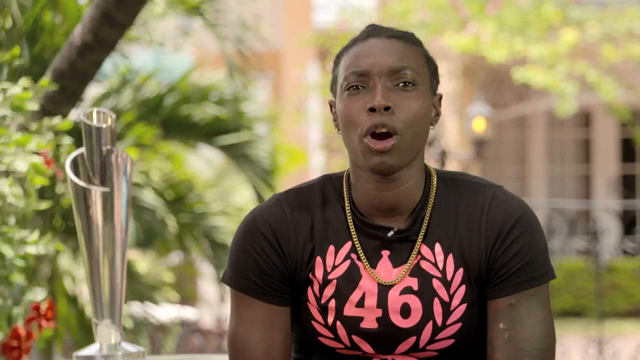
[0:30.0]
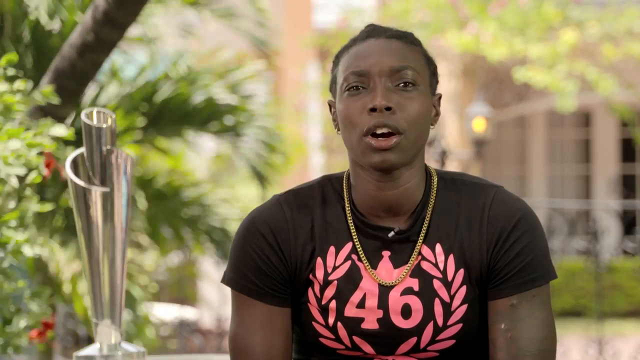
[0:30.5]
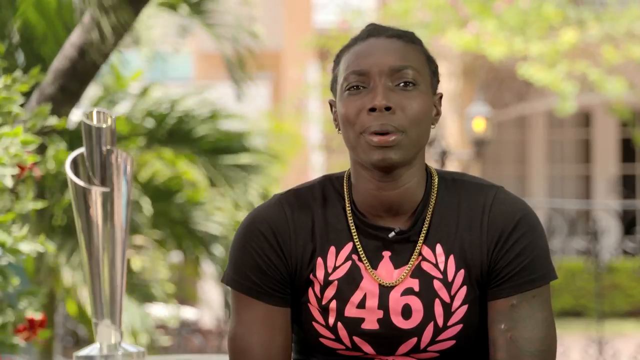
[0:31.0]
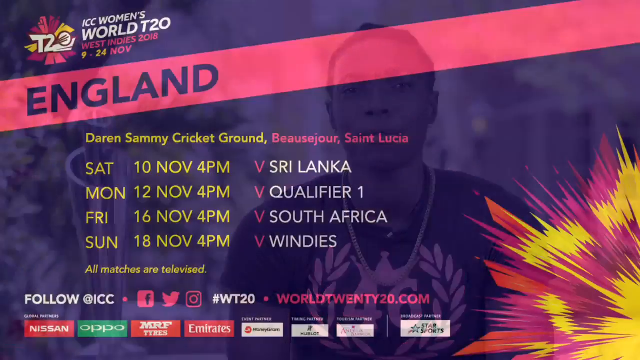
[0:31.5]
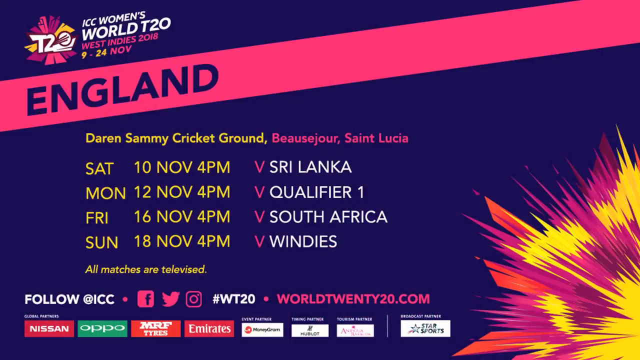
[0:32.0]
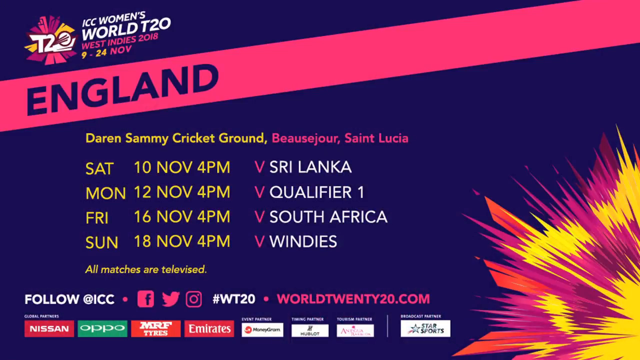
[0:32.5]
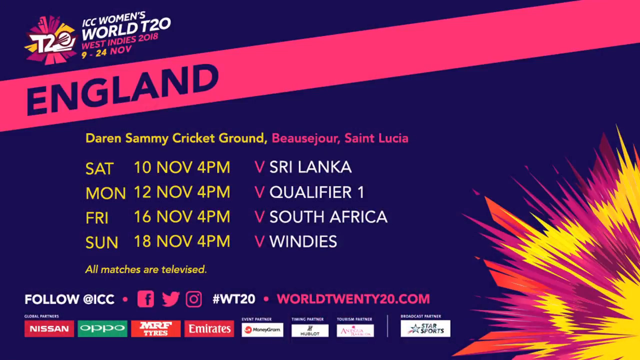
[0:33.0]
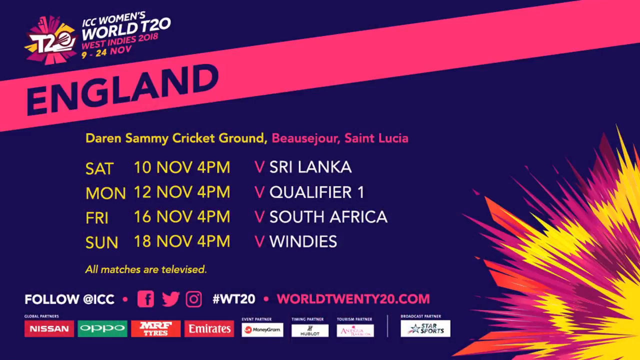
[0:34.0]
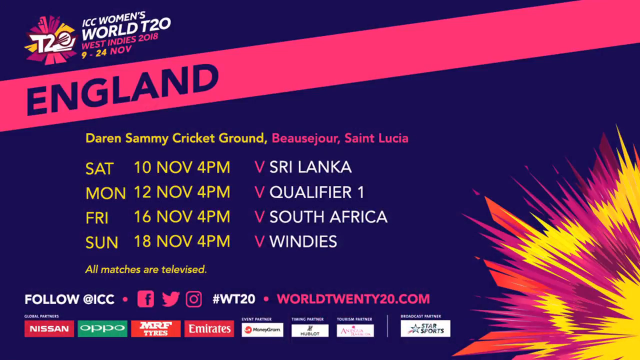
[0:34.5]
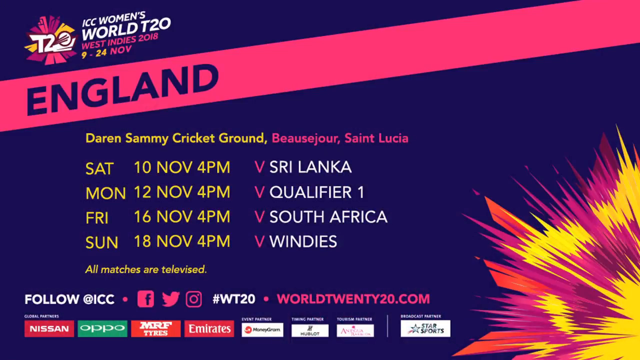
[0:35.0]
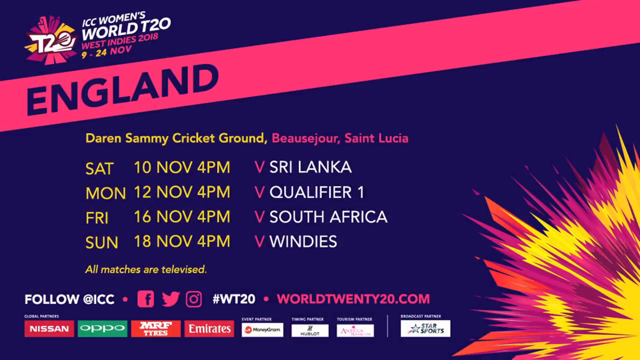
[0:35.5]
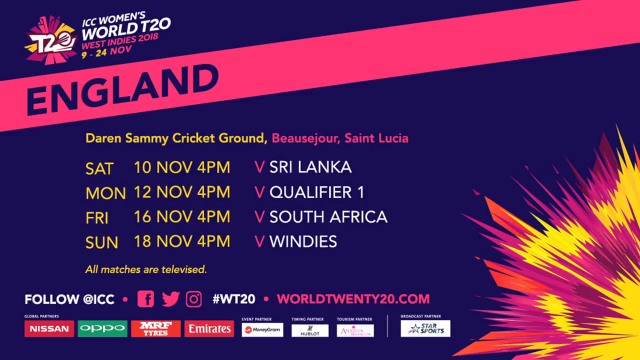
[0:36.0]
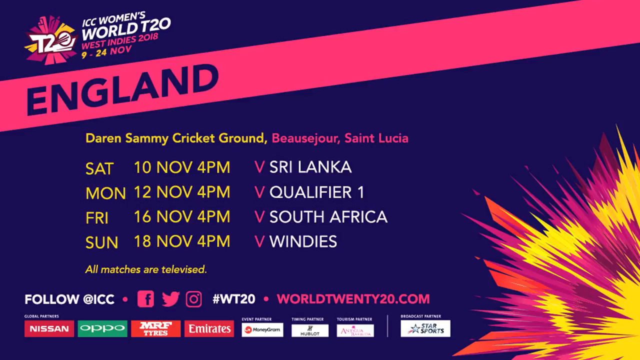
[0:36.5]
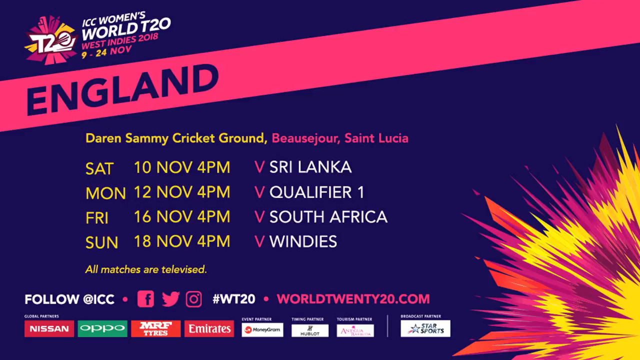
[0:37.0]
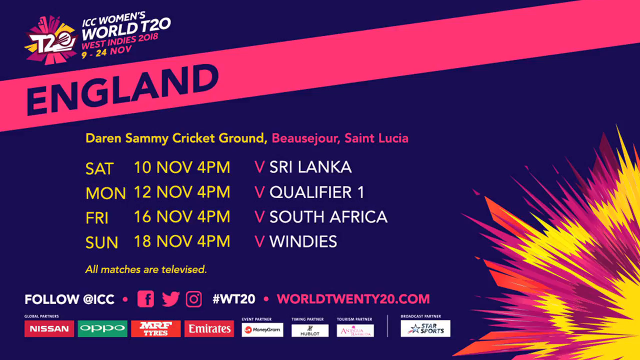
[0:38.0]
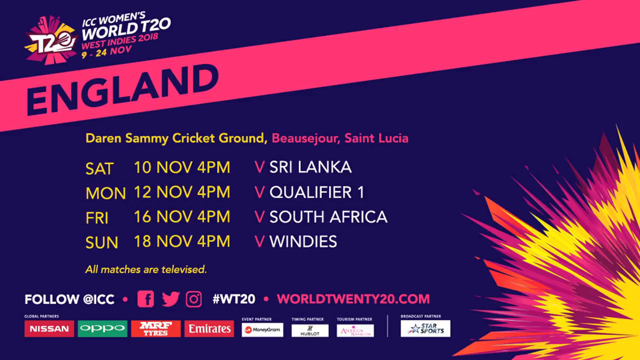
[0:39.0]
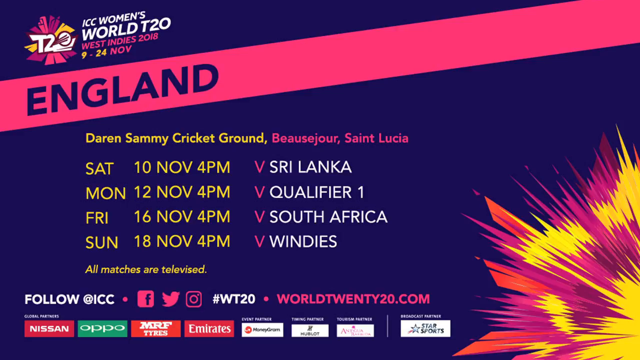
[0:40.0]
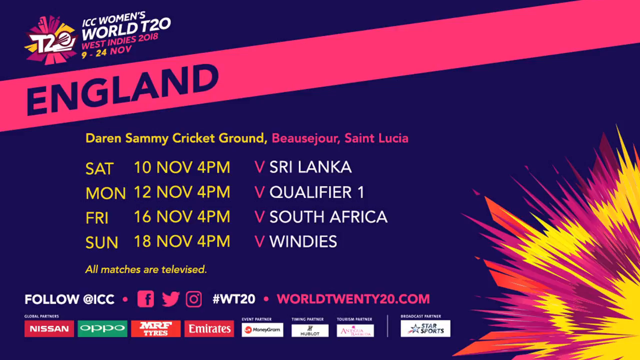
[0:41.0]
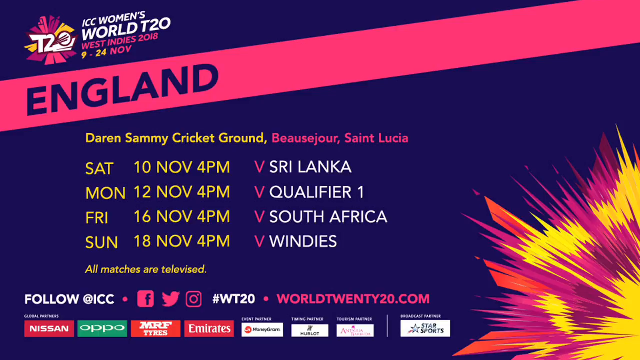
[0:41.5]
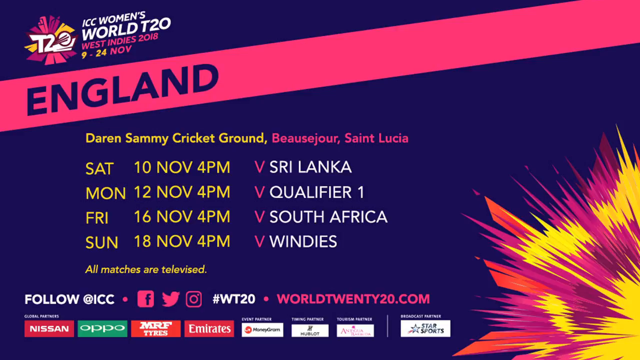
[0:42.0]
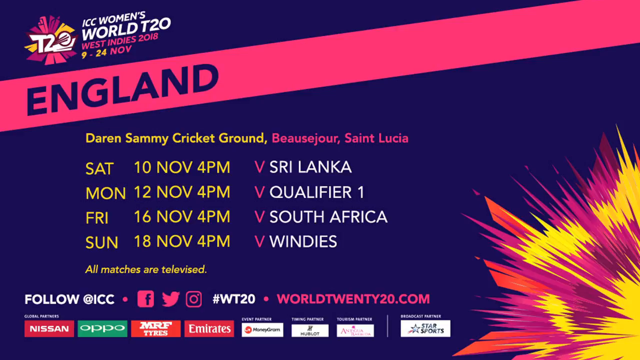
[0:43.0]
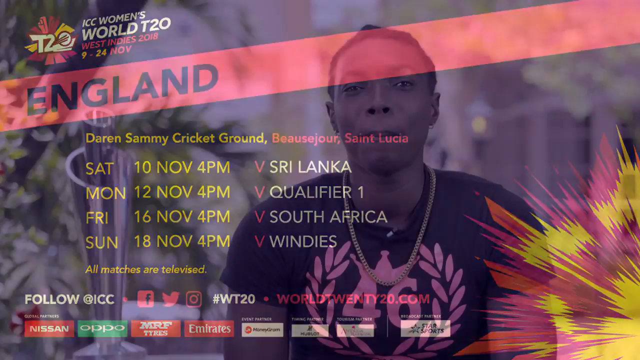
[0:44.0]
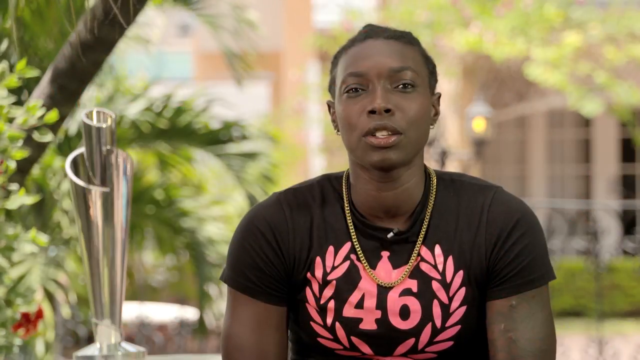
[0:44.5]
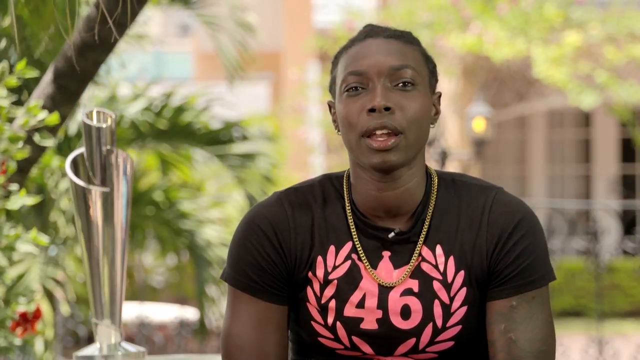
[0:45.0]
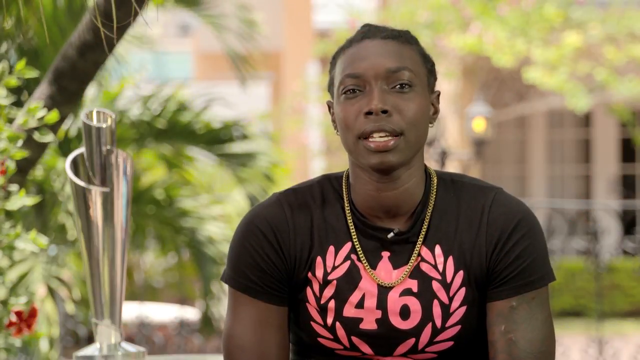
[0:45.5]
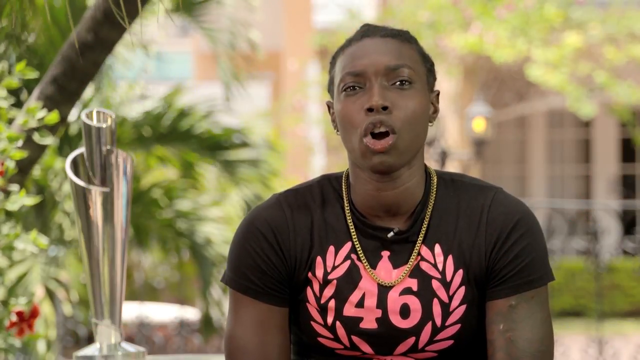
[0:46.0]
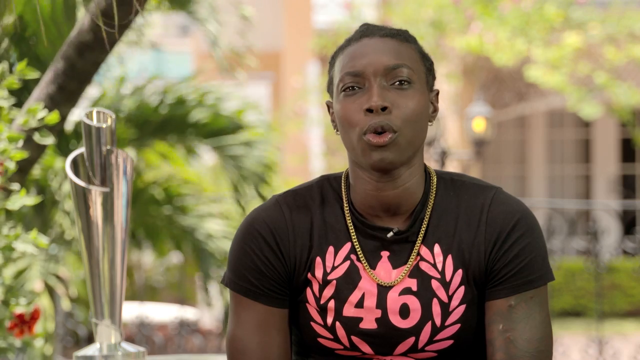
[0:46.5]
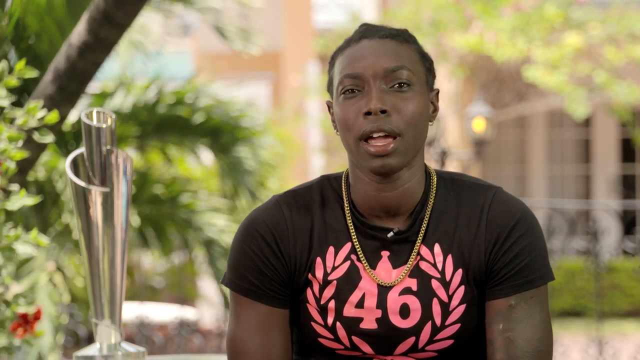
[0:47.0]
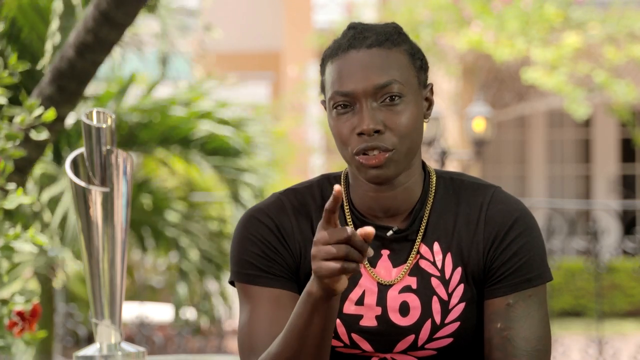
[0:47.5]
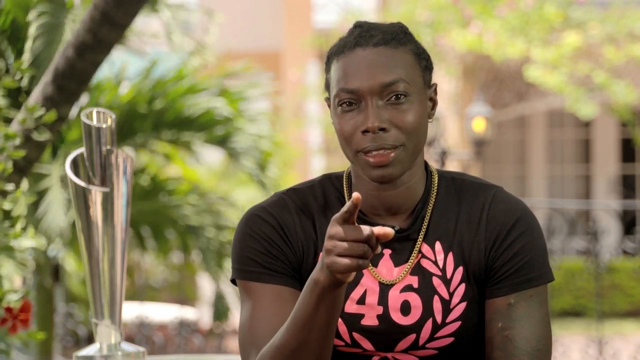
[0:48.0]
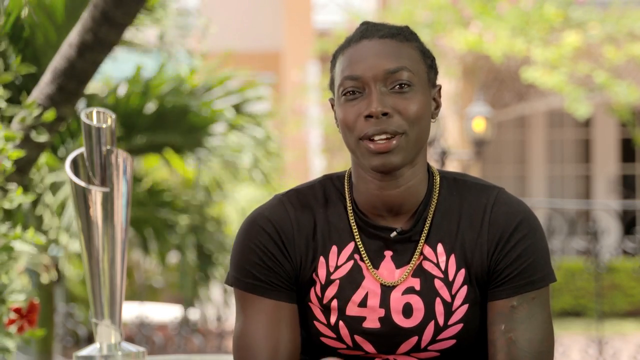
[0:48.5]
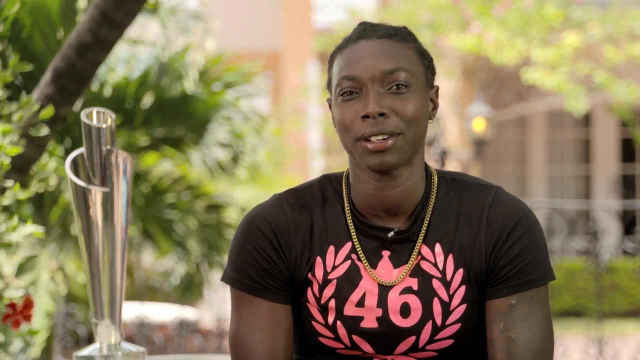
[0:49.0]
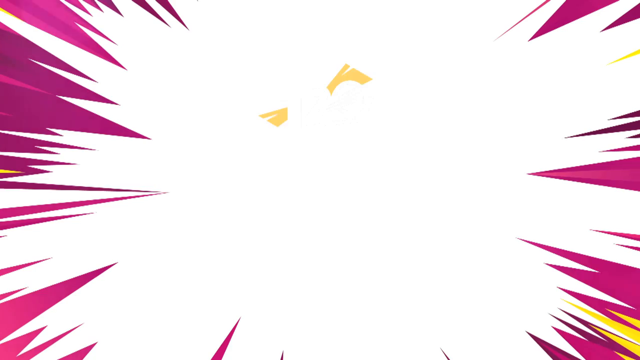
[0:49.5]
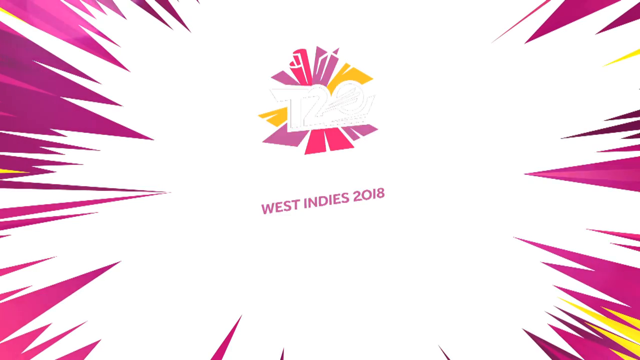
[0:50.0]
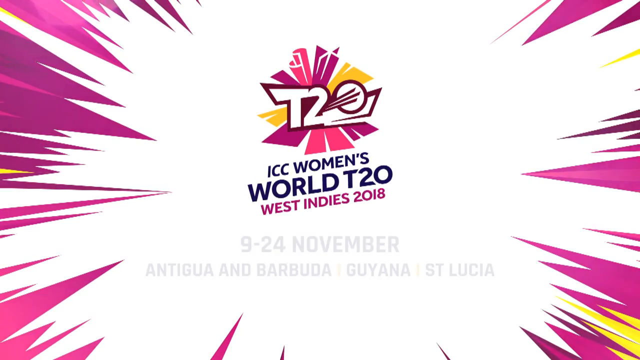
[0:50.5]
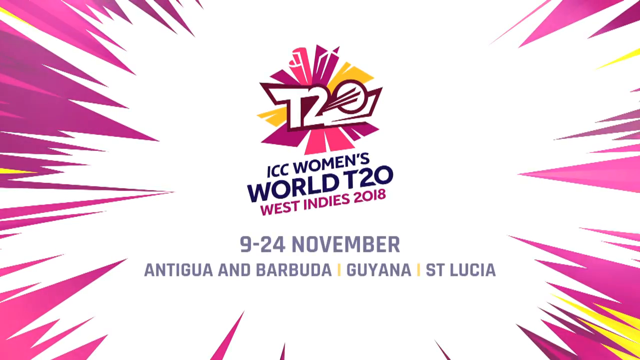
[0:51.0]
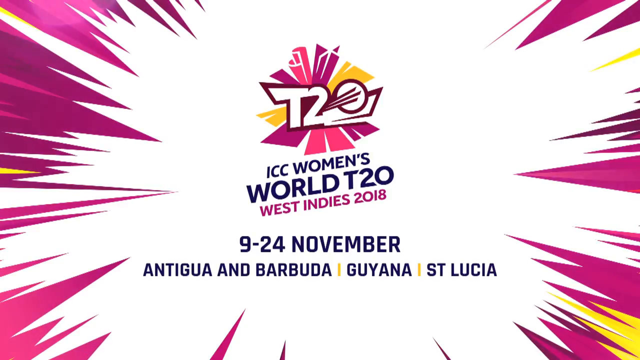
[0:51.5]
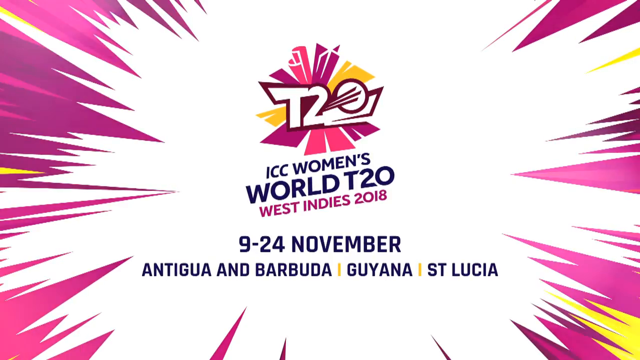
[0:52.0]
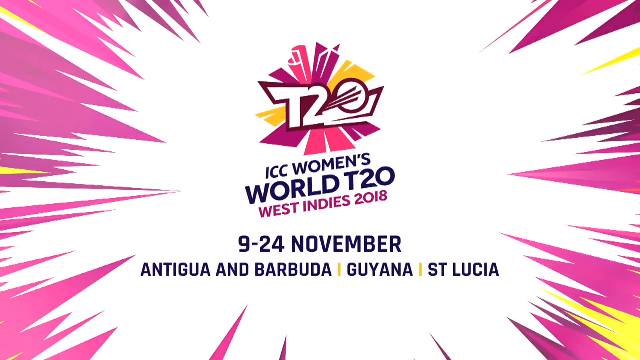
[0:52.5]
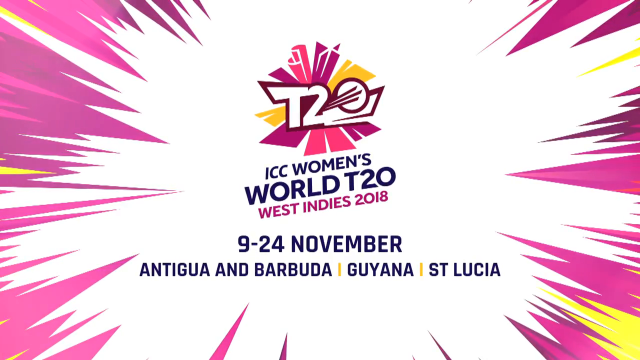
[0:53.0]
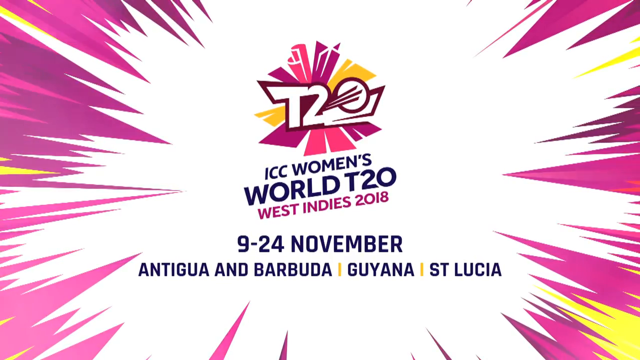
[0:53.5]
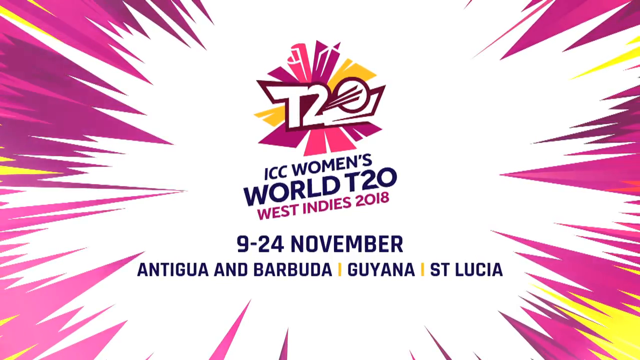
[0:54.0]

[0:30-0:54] A Black African-American woman wears a black t-shirt with a red graphic of the number 46 with a crown, and a gold chain. A silver trophy is to the left of her, and behind her are some palm trees and a somewhat blurry background. She looks at the camera and talks, and then the video transitions to a blue background with a red stripe on the screen that says "England" in blue text. Additional text reads "ICC Women's World T20, West Indies 2018, 9 to 24 November" and "Darren Sammy Cricket Ground," "St. Lucia," with dates "Saturday, November 10th, 4 p.m.," "Monday, November 12th, 4 p.m.," "Friday, November 16th, 4 p.m." and "Sunday, November 18th, 4 p.m.," and teams "Sri Lanka," "Qualifier 1," "South Africa" and "Windies." Text says "All matches are televised." Sponsors such as Nissan, Oppo, Emirates and Star Sports appear, along with social media platforms: text to follow ICC on Facebook, Twitter and Instagram, "#WT20" and the website "world2020.com." The video then returns to the woman looking at the camera and talking while the trees in the background blow in the wind, and she points at the camera. It then goes to a white and red screen that says "ICC Women's World T20 West Indies 2018, November 9-24, Antigua and Barbuda, Guyana, and St. Lucia."